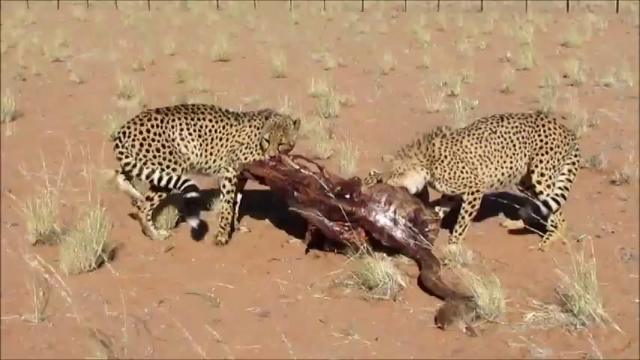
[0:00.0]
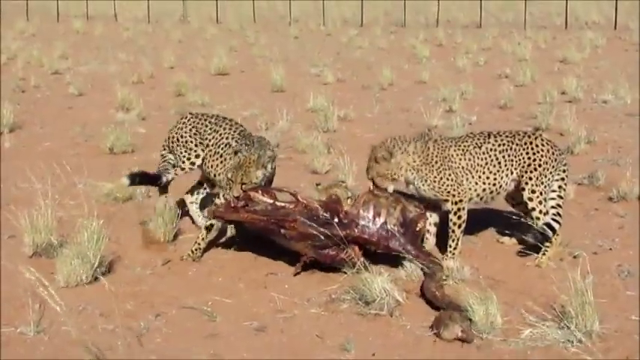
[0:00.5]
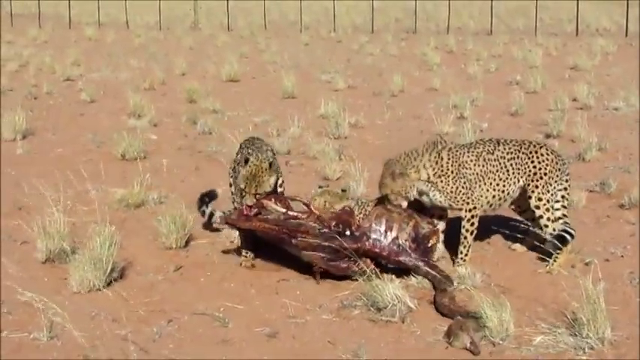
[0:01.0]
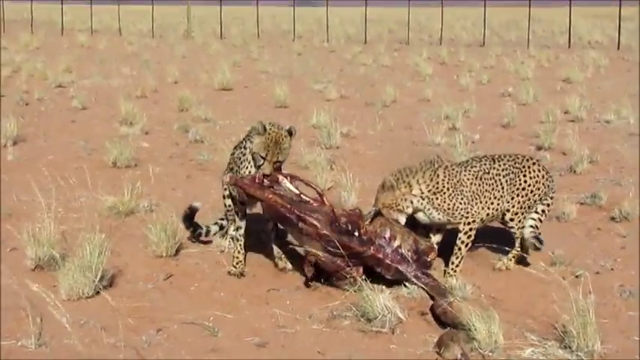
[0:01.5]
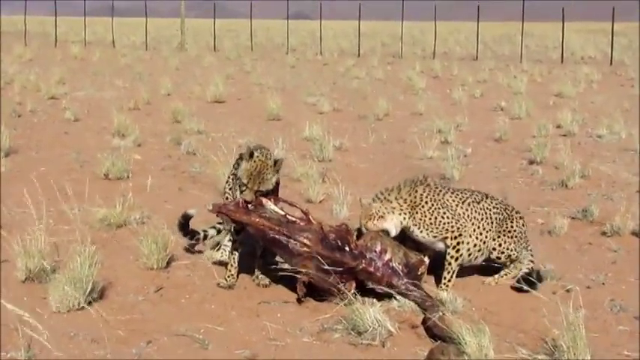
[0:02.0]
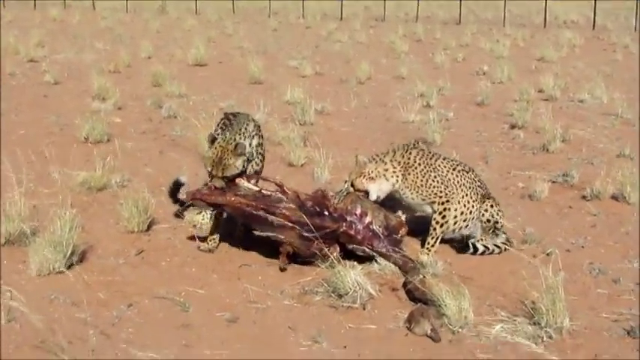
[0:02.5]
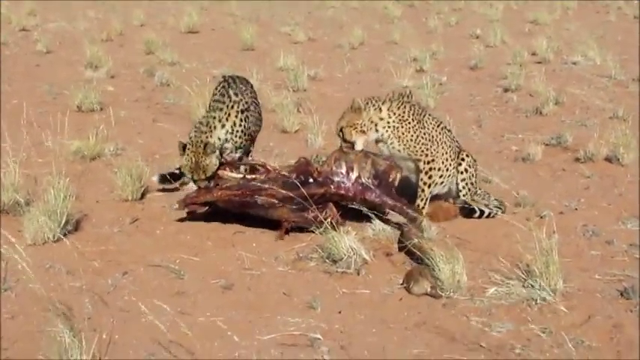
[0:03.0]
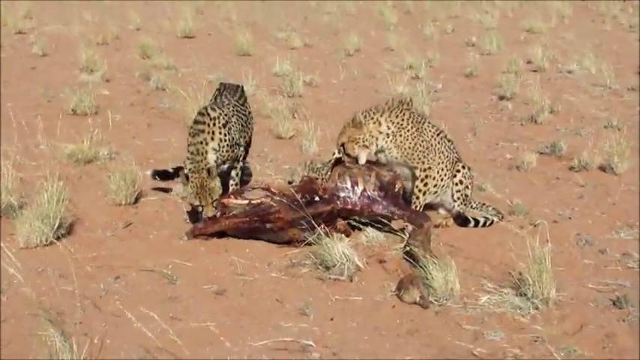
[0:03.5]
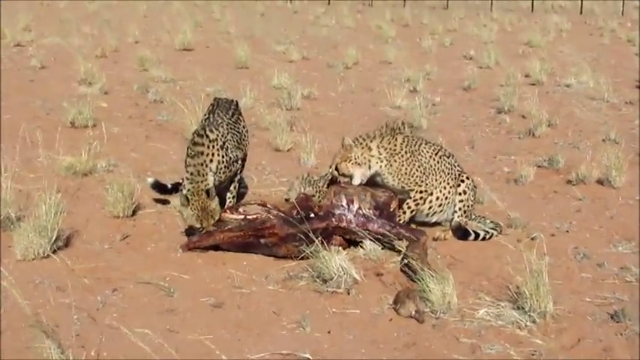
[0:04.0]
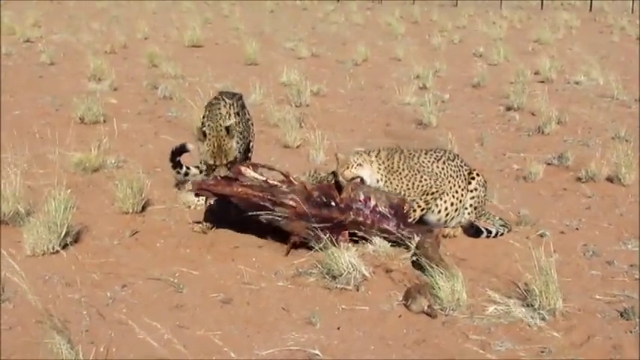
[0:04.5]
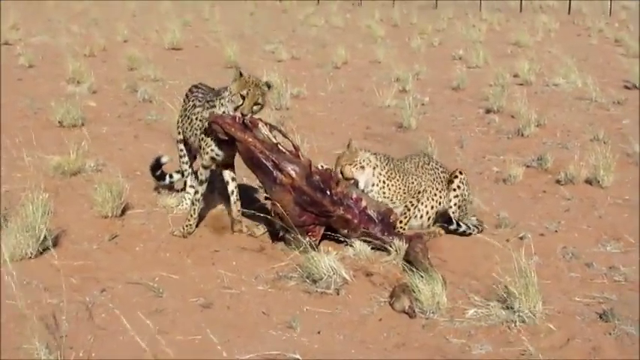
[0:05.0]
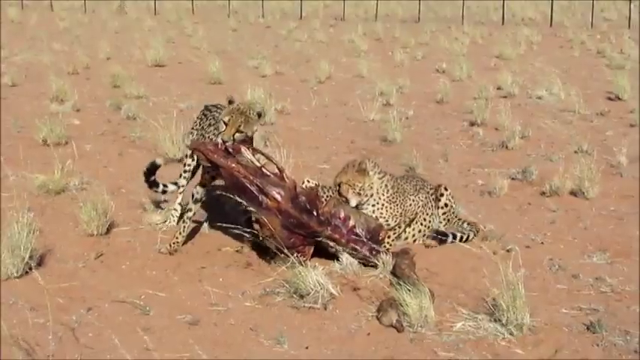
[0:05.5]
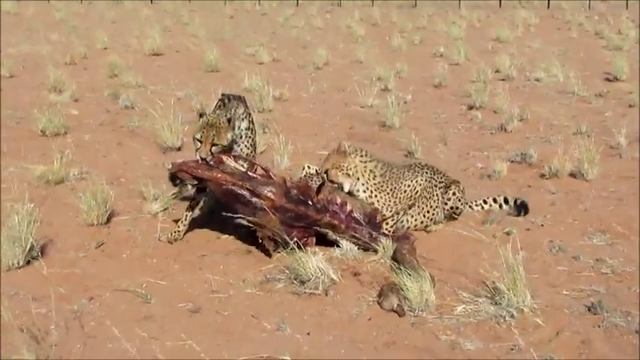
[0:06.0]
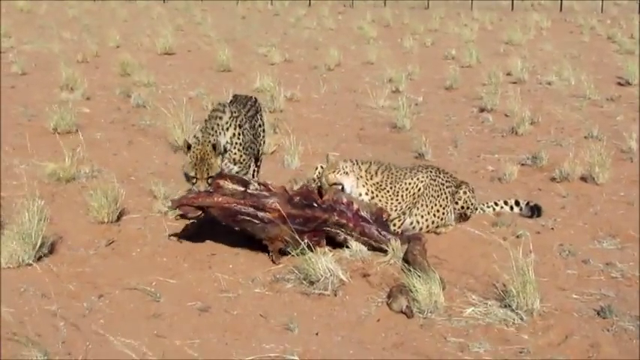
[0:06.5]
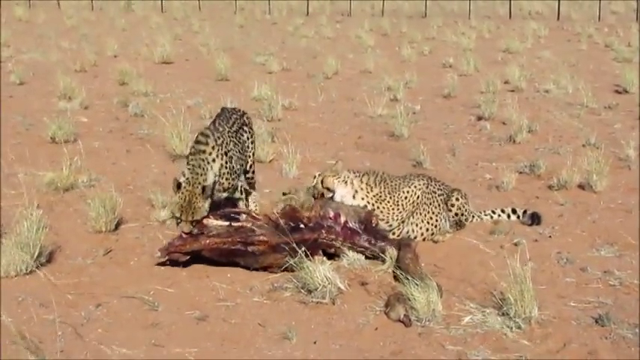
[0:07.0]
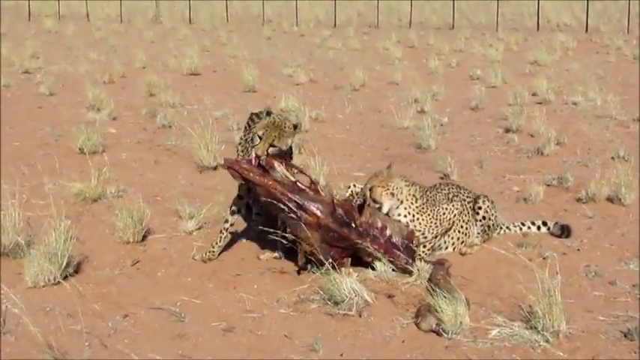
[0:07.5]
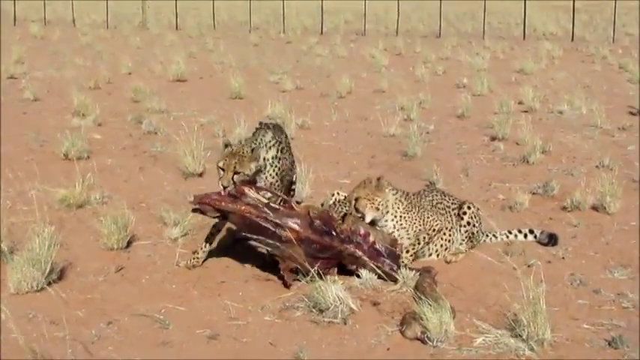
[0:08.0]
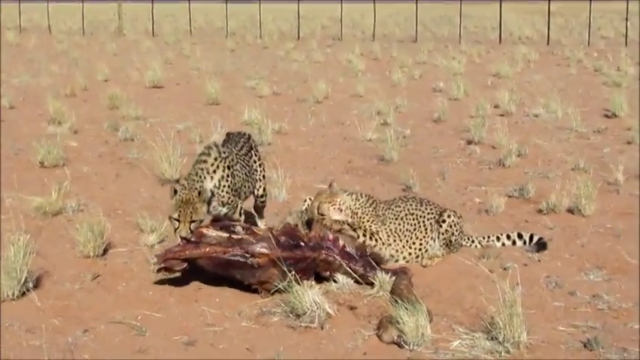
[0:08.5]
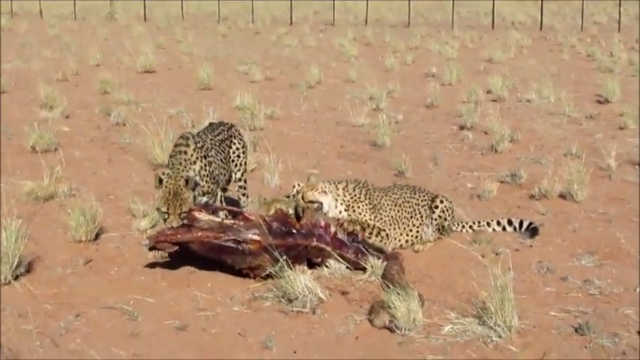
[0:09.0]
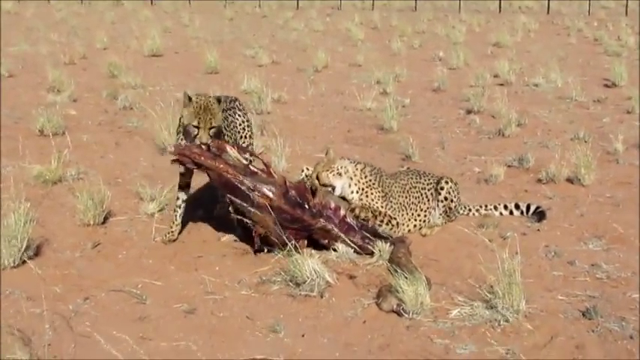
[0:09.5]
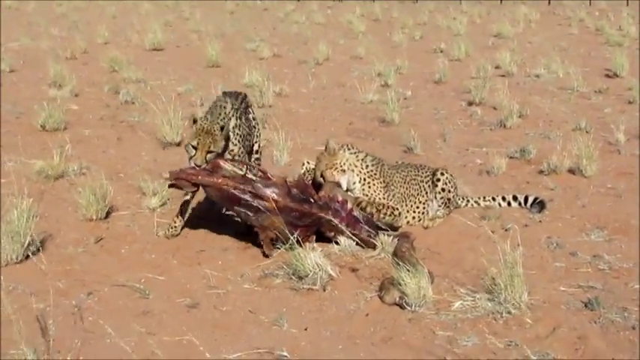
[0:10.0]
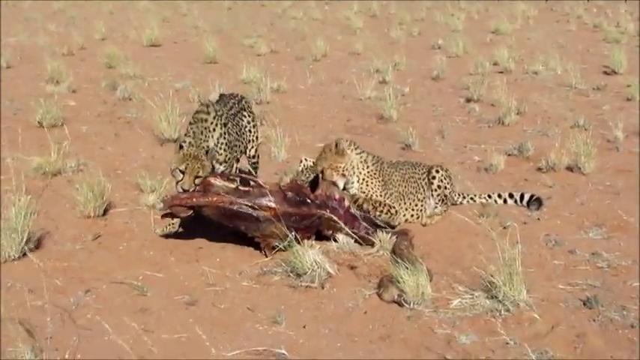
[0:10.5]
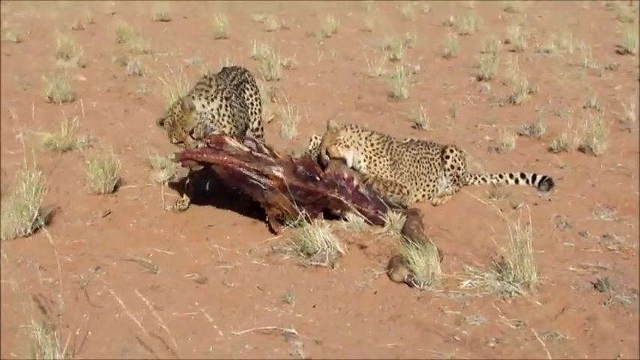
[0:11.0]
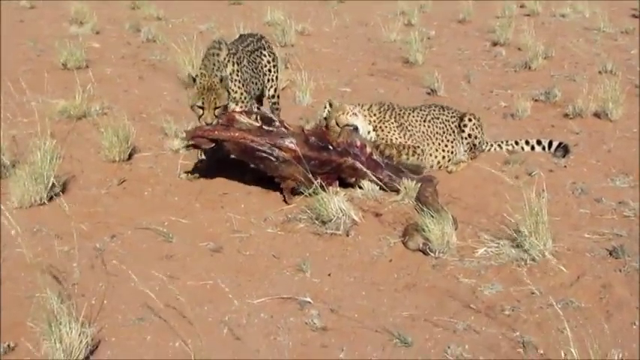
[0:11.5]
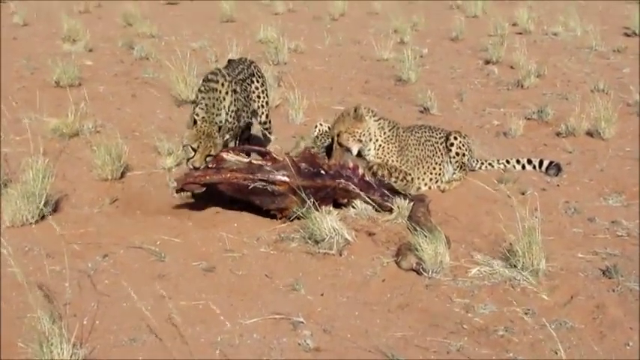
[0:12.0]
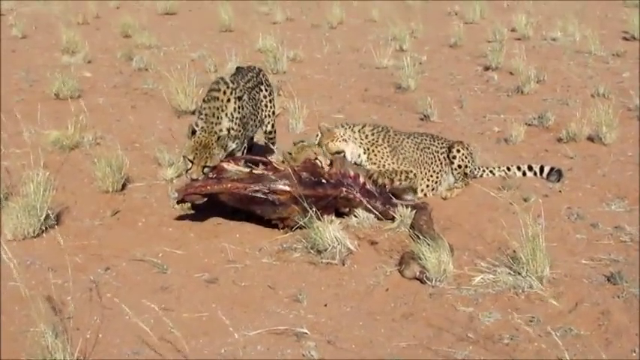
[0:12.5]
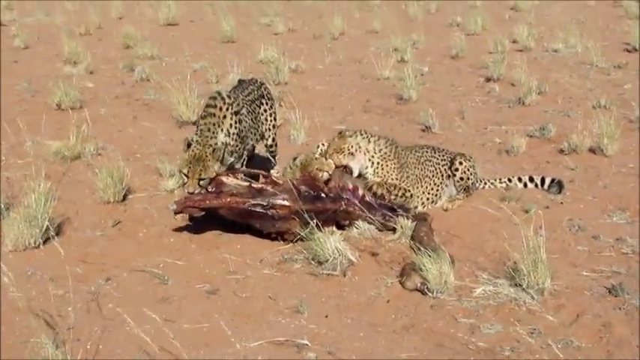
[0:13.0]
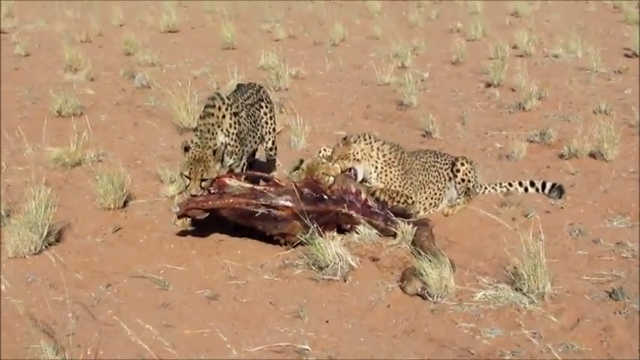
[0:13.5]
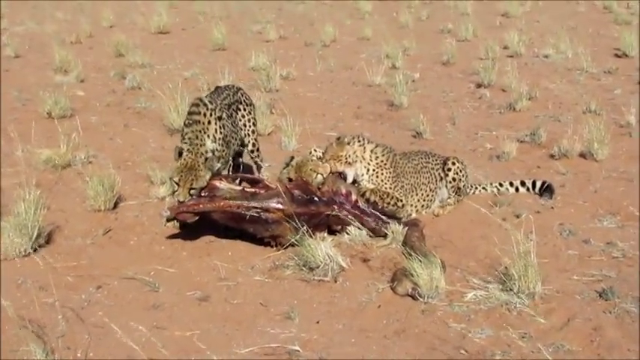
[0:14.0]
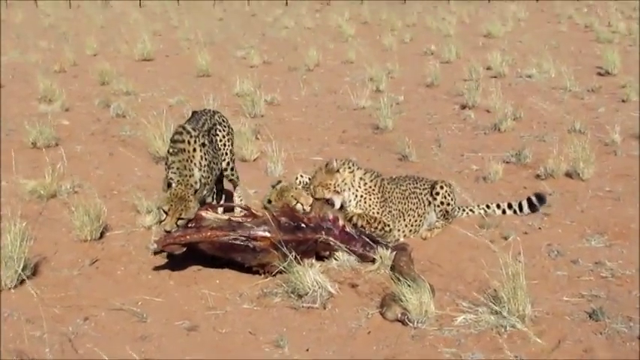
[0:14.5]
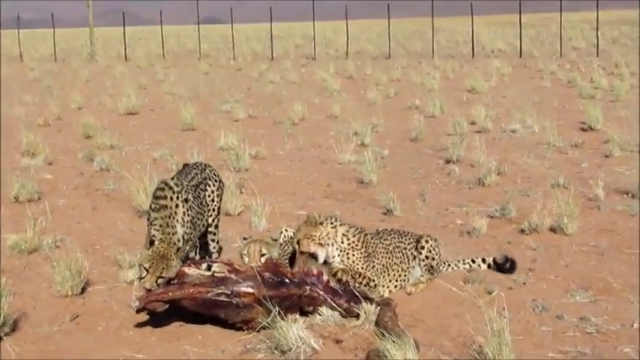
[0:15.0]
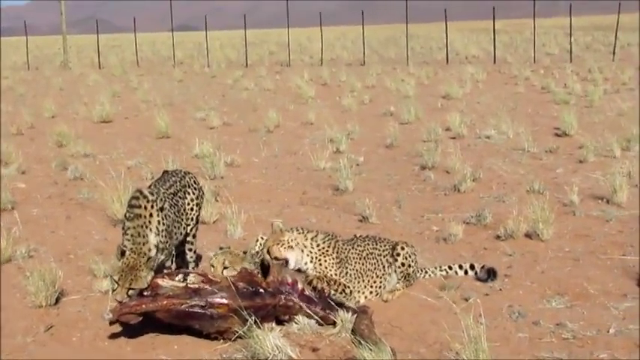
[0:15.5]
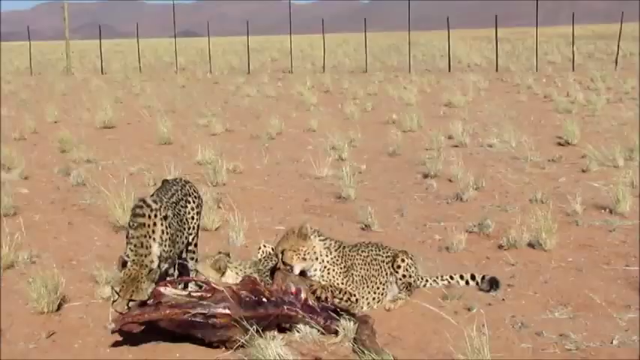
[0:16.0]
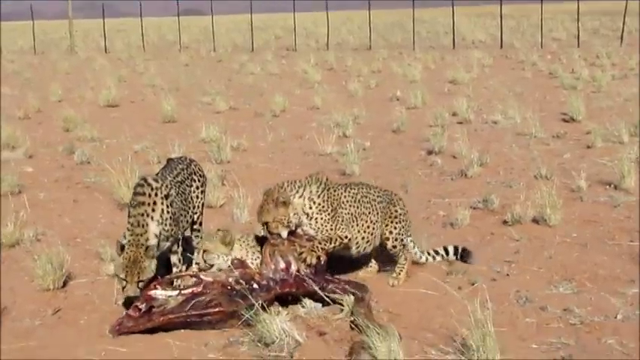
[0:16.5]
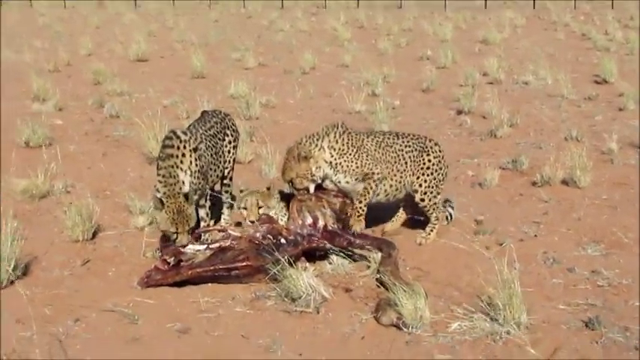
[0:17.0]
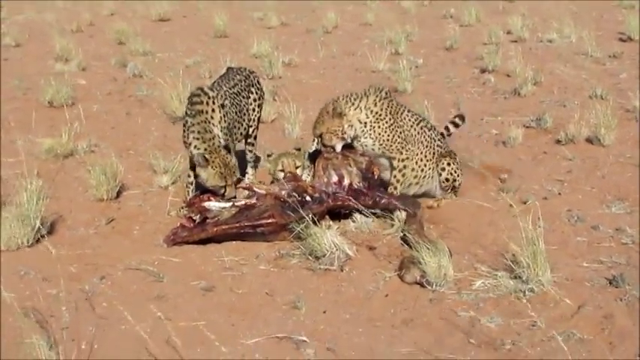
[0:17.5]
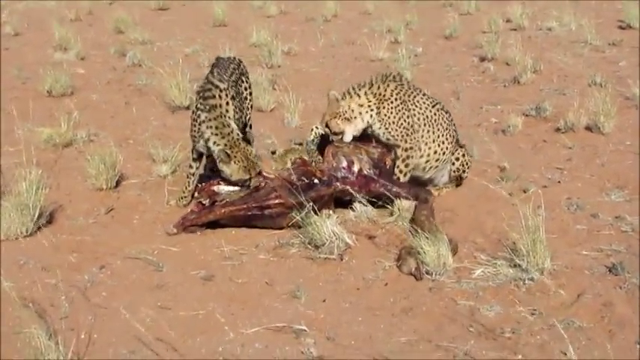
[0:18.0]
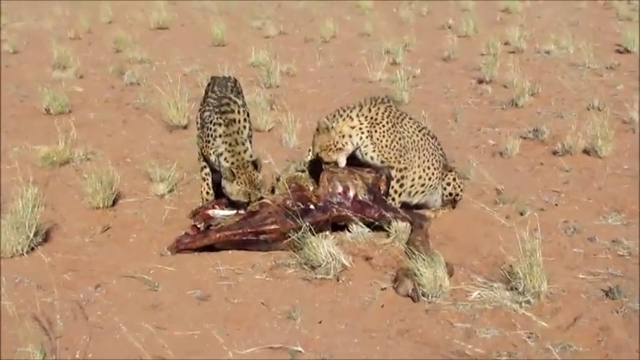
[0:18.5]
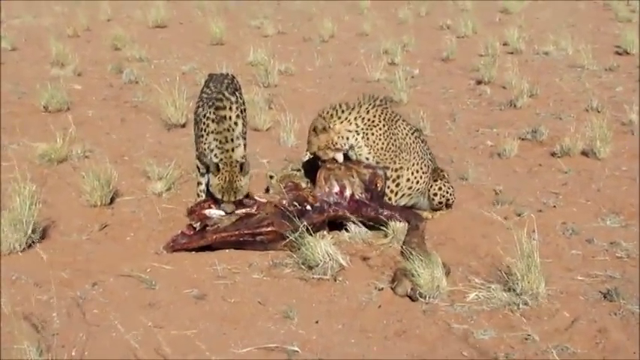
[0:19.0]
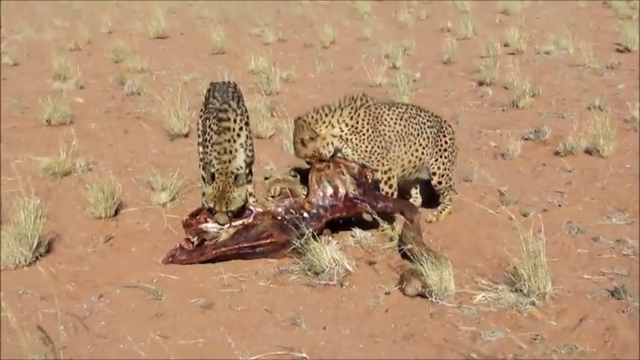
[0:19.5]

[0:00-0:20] The video opens in an arid scrubland: lots of dirt and lots of very small bushes in a very hot, dry-looking environment. Two cheetahs, one on the left of the frame and one on the right, hold the carcass of another animal in their mouths. It is a little hard to tell what the animal is, but both are kind of carrying and ripping at its flesh, trying to get a bite. The one on the left picks up and puts down the carcass fairly often, trying to rip the flesh off that way, while the cheetah on the right sits down and gnaws on it, using its paw to kind of manipulate the carcass. A little dust comes up as the carcass hits the ground several times. The cheetah on the left, still standing, moves its face to the ground to eat closer to the ground, revealing a third cheetah behind the middle of the same carcass, so there are actually three cheetahs.